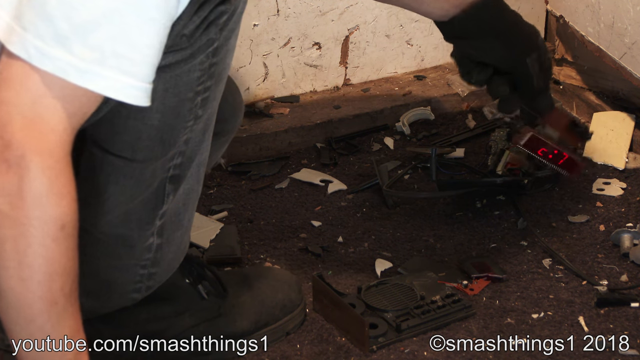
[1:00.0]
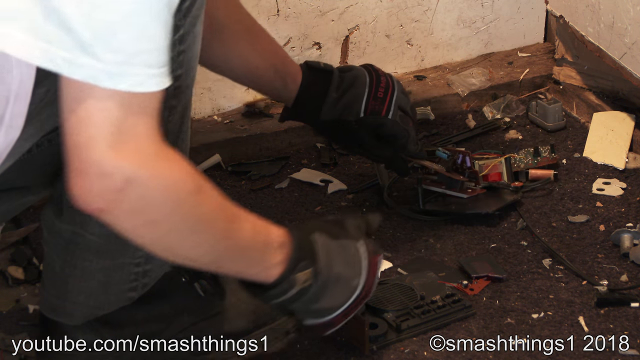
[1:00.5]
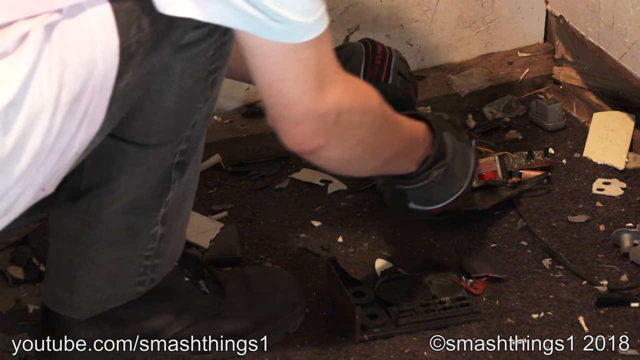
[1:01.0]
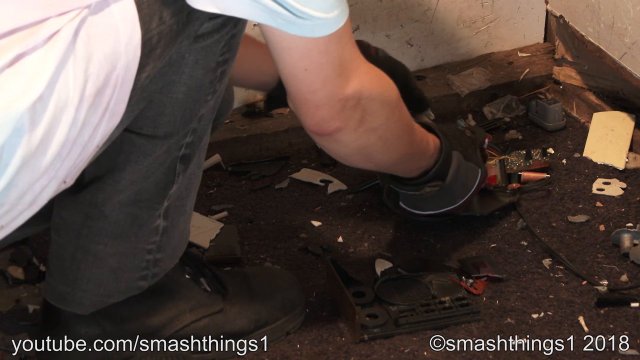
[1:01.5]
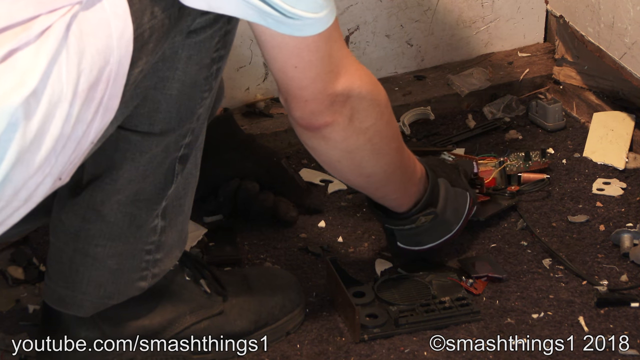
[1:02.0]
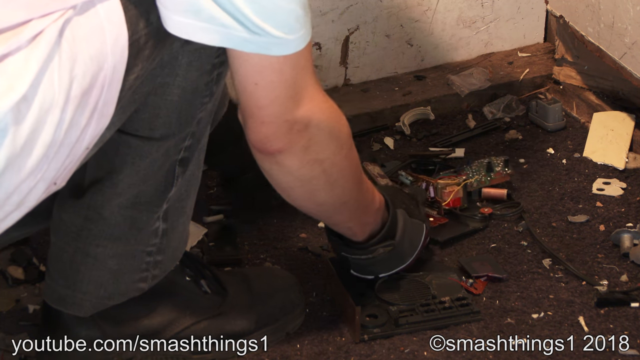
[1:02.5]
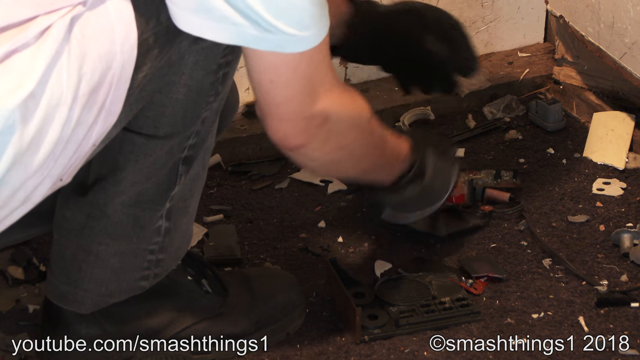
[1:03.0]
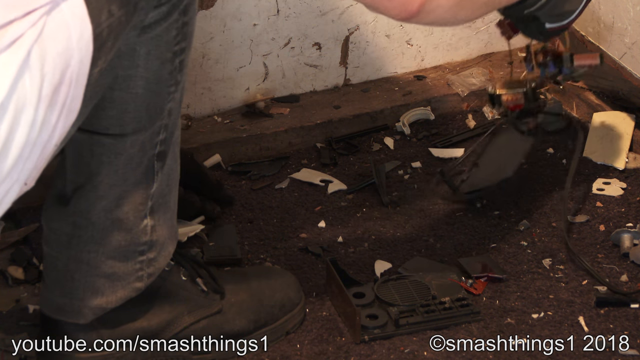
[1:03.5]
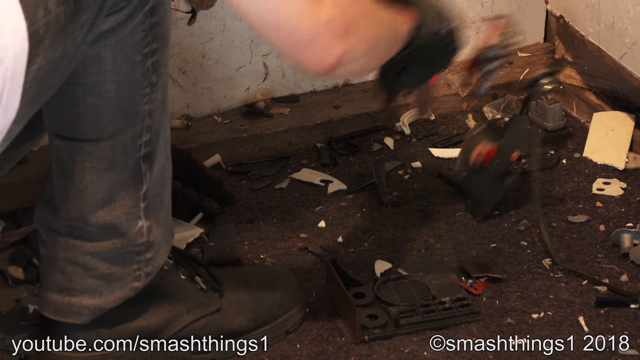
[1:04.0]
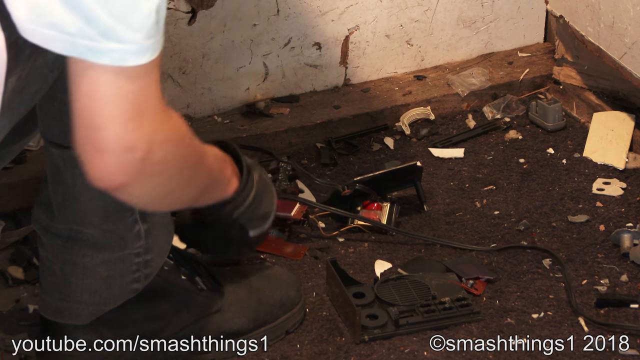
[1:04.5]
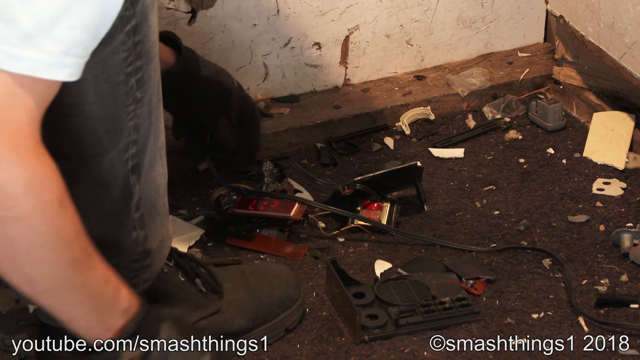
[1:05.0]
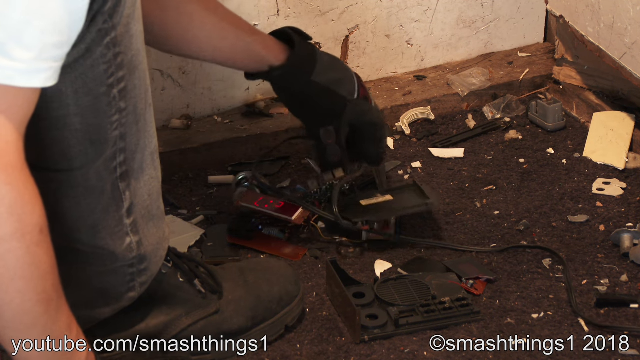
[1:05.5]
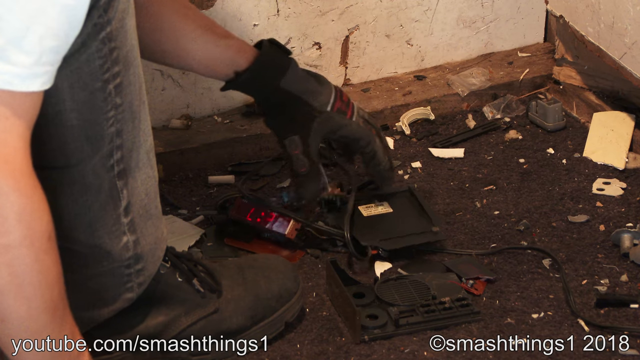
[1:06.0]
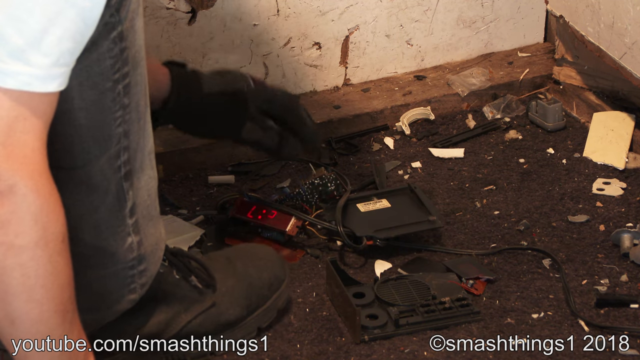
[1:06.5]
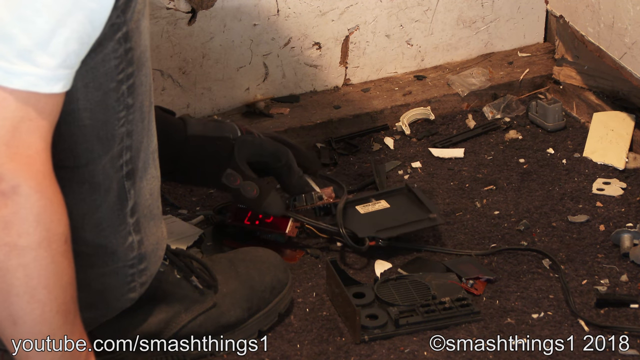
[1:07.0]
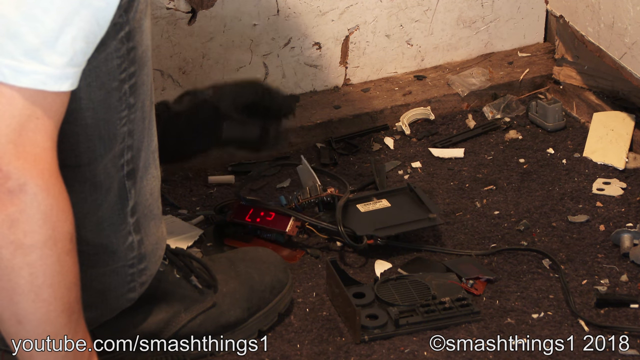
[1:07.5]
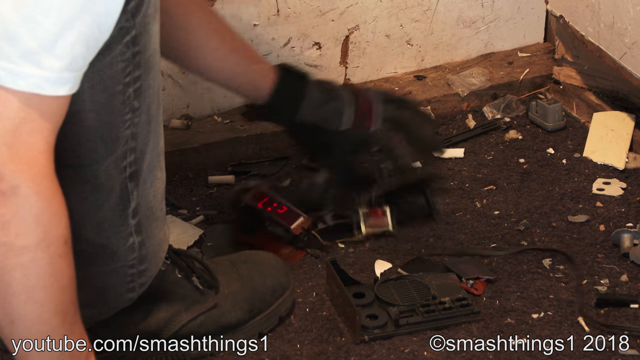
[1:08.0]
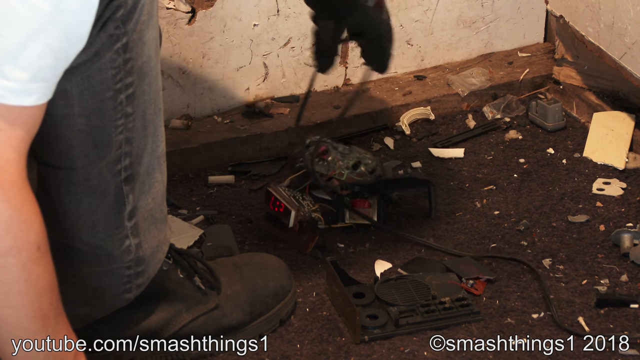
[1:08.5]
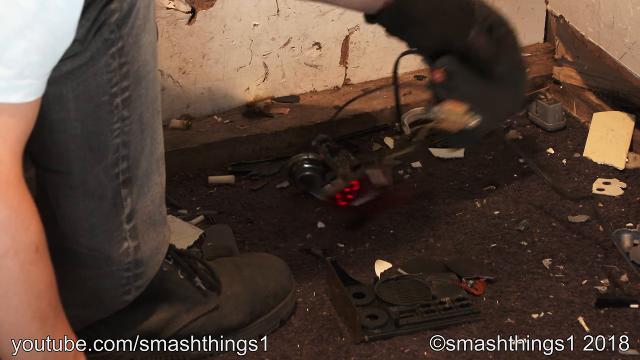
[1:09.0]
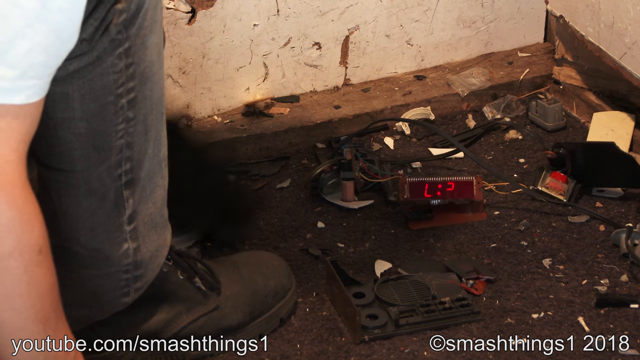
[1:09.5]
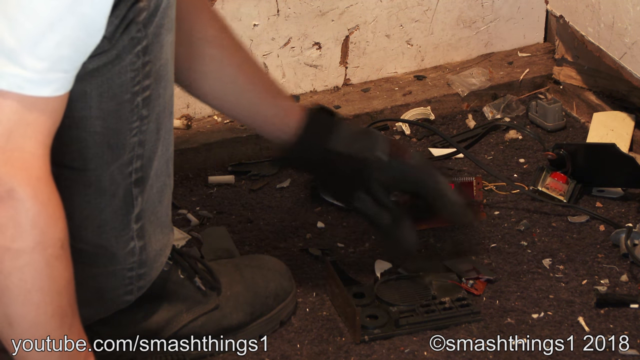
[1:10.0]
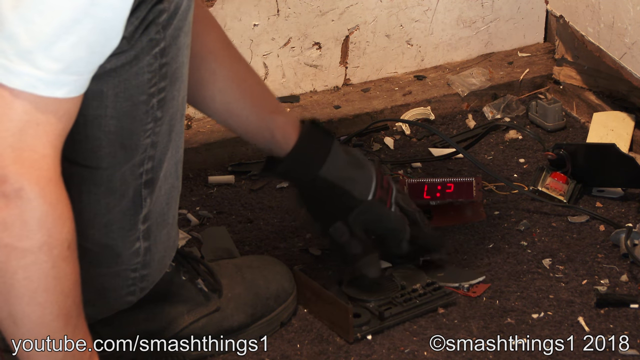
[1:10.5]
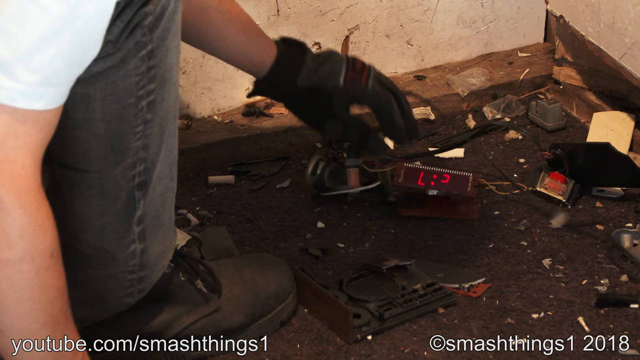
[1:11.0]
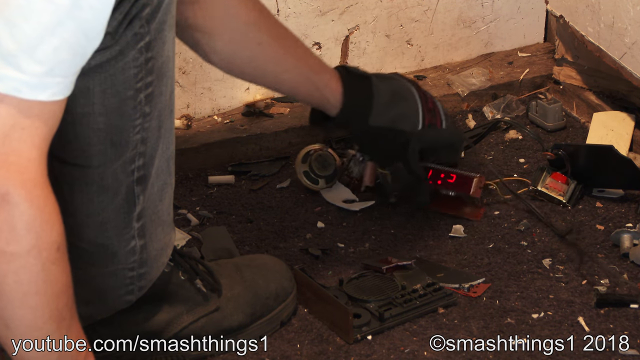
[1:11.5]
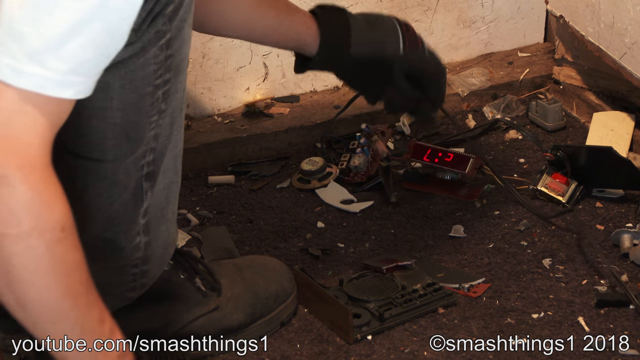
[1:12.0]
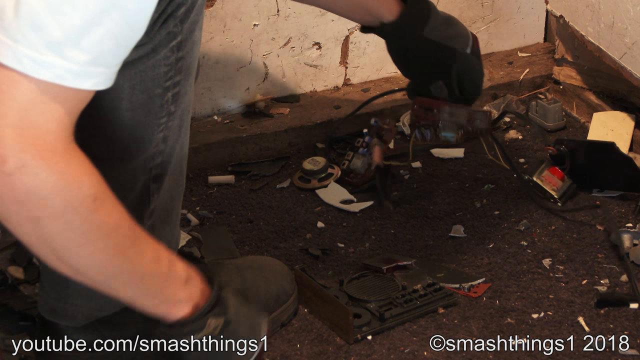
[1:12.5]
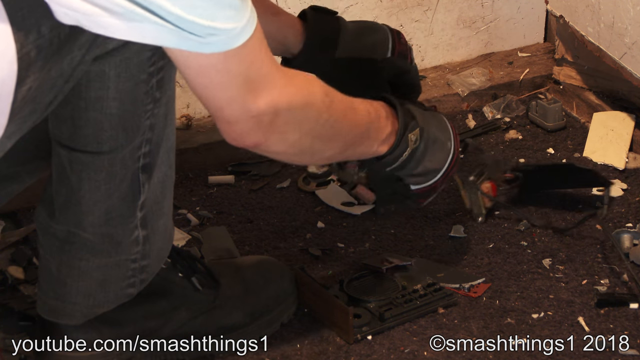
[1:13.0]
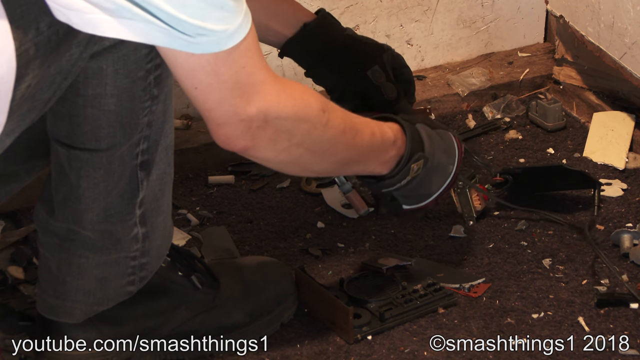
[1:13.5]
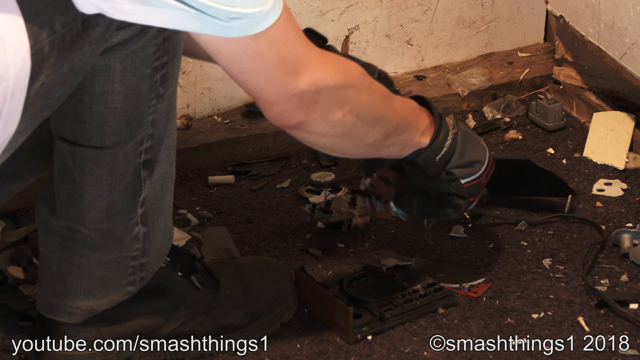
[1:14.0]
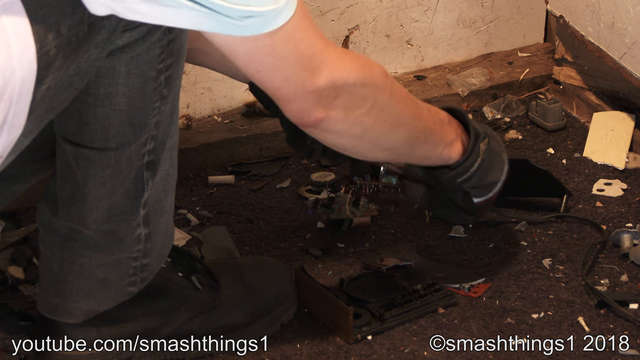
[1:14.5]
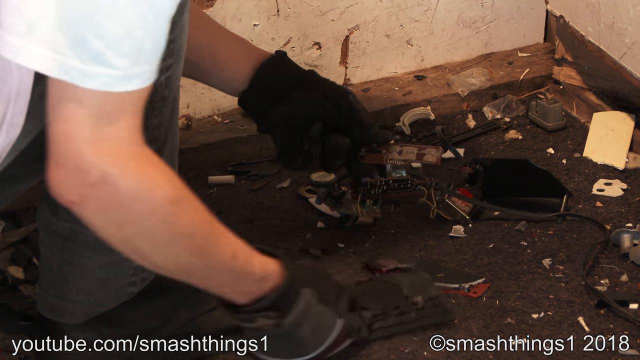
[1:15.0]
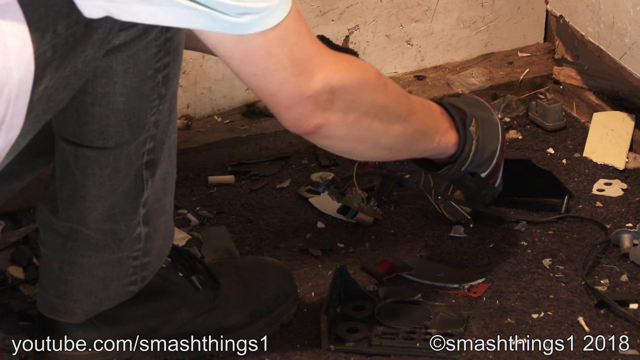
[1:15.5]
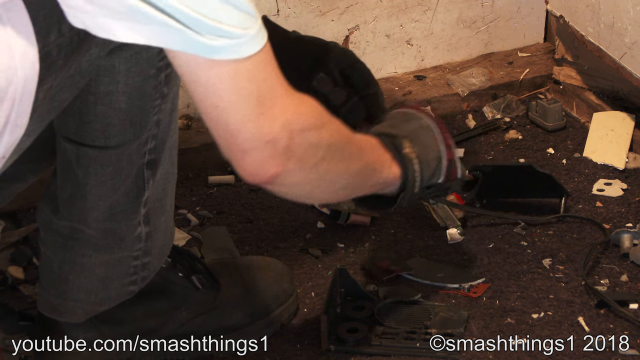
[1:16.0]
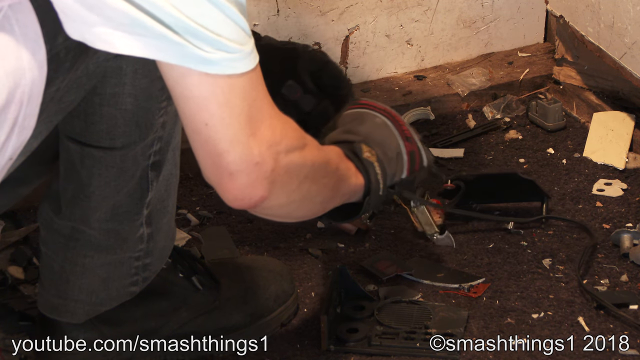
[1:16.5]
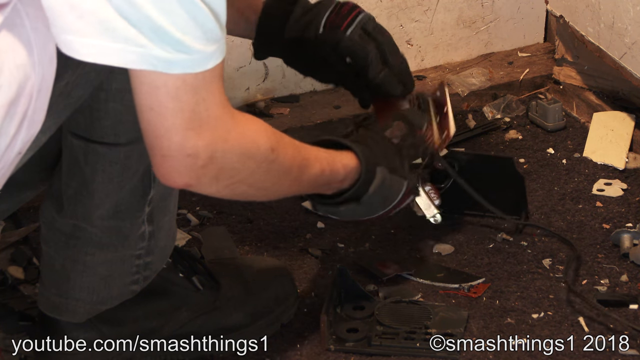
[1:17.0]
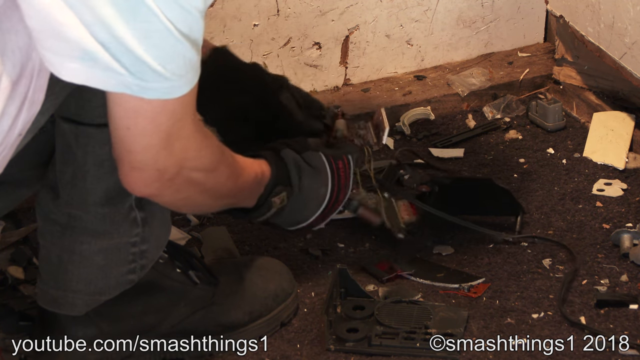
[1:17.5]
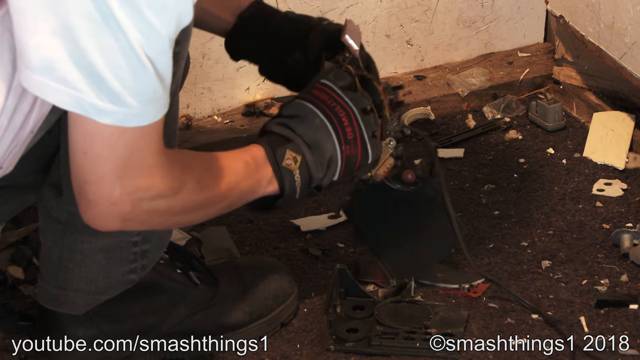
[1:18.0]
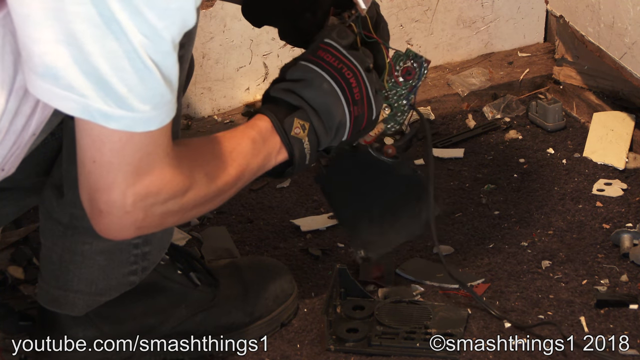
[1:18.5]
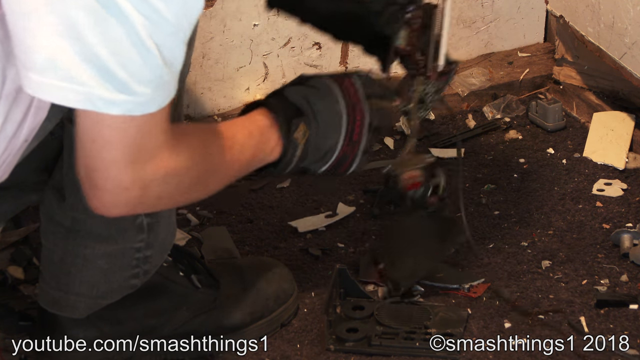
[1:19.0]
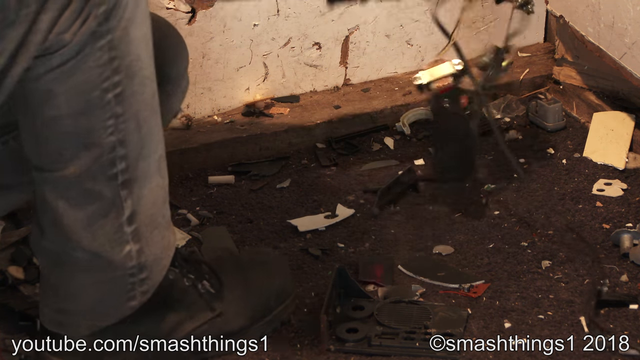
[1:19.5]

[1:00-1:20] A close-up view shows a corner of what looks to be a smashing room. The man is visible only from his bent knees downward and at his shoulders as he hunches over, wearing a white t-shirt, denim jeans and dark black gloves. The corner holds an array of smashed items, including electronic cords and clocks, and appears to contain pieces of broken plastic; it is a mess. The walls look disintegrated, banged in, possibly by sledgehammers or just by items thrown at them, with many indentations. Text at the bottom of the screen reads "youtube.com smash things 1" and "copyright smash things 1 2018." The man struggles to further rip apart a clock radio that he had previously thrown to the ground quite violently.